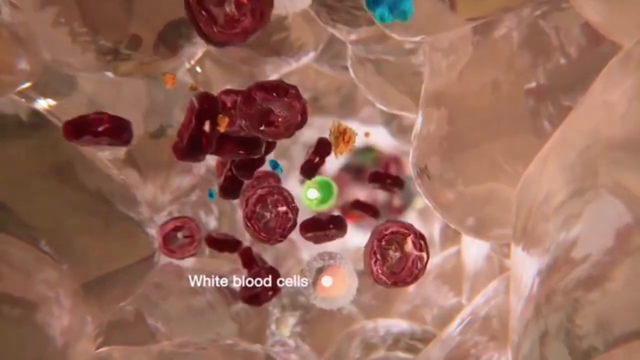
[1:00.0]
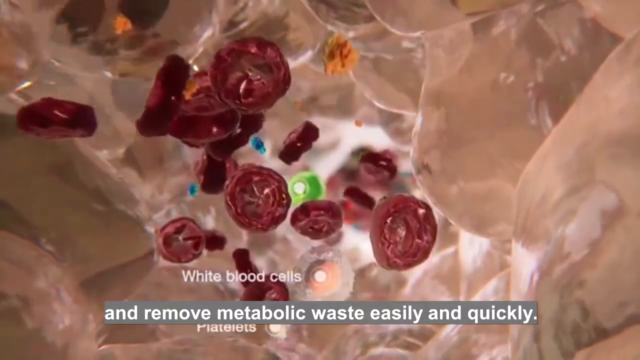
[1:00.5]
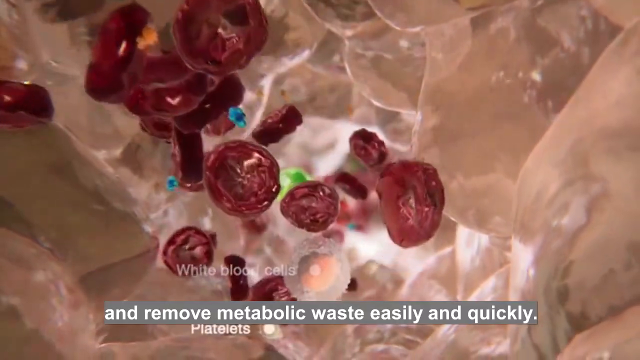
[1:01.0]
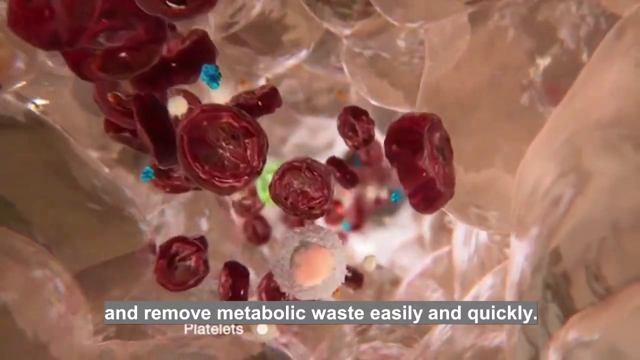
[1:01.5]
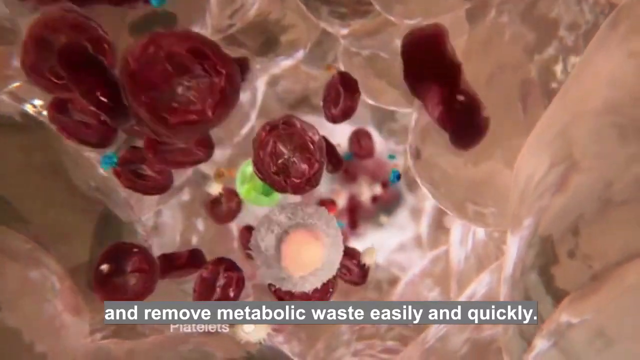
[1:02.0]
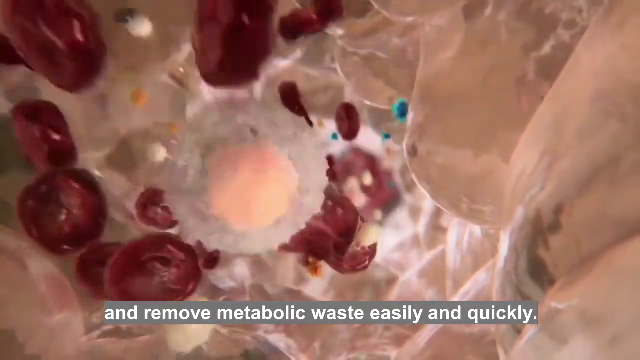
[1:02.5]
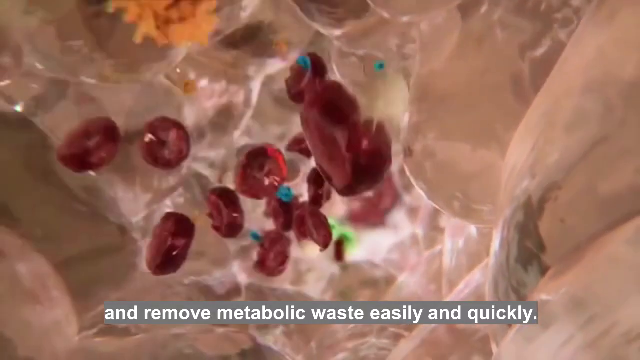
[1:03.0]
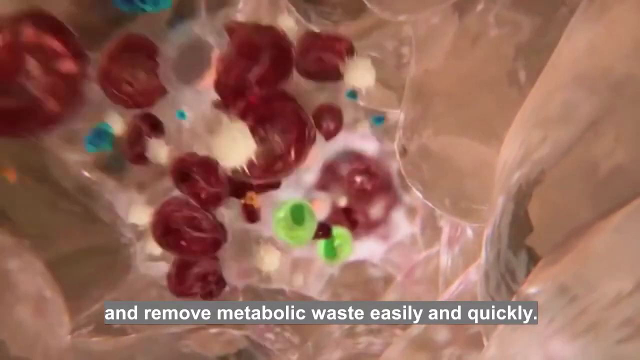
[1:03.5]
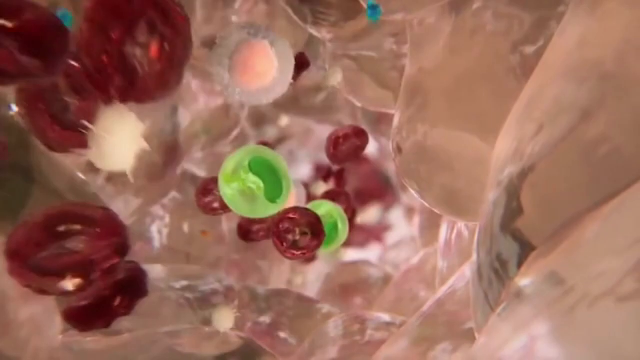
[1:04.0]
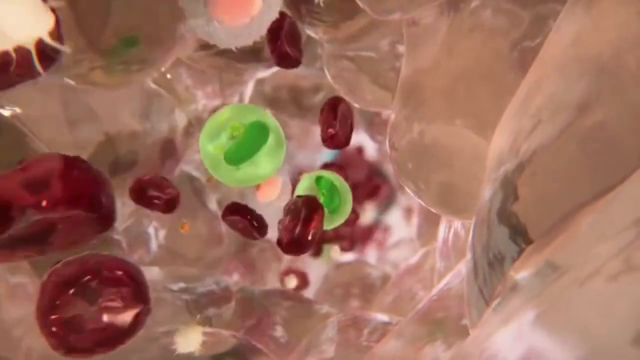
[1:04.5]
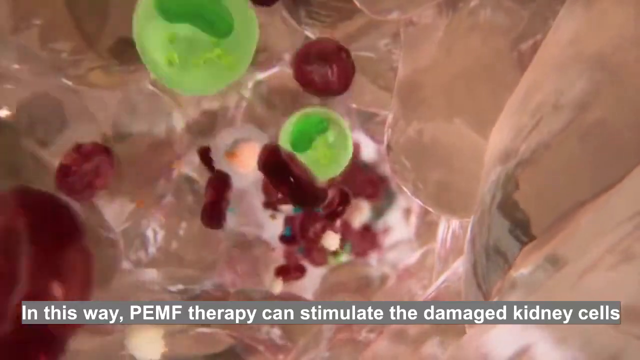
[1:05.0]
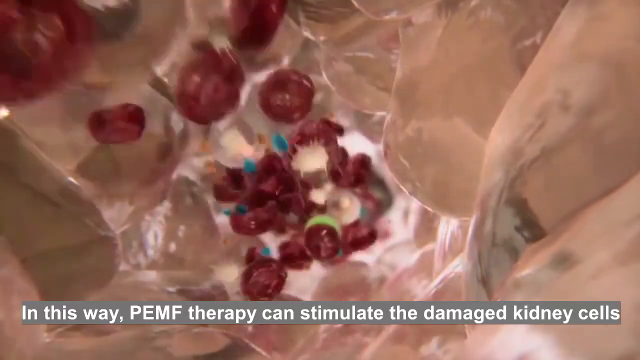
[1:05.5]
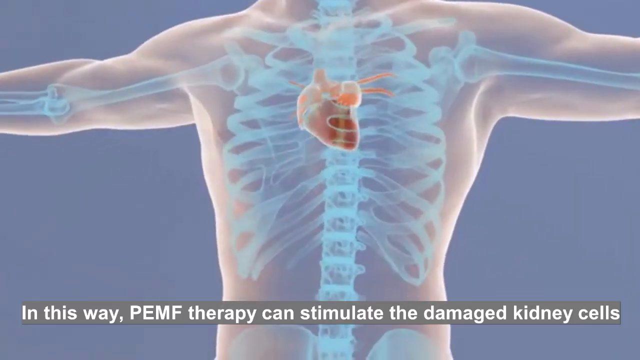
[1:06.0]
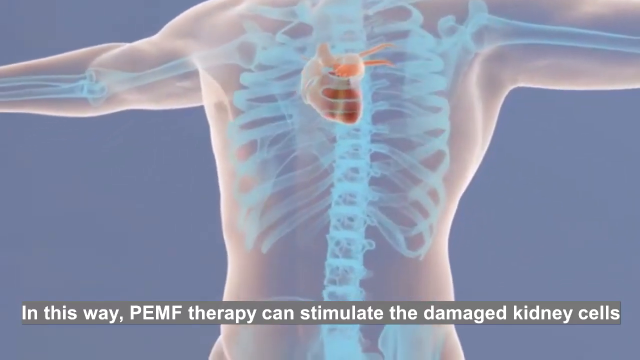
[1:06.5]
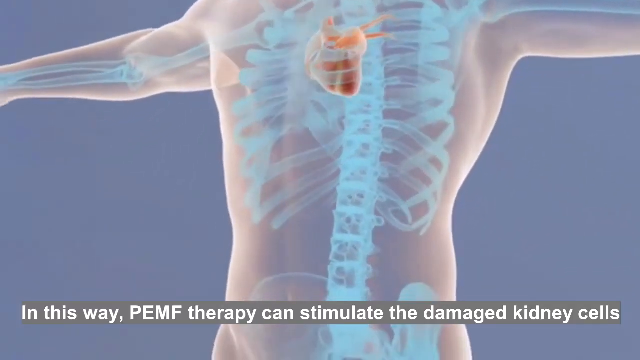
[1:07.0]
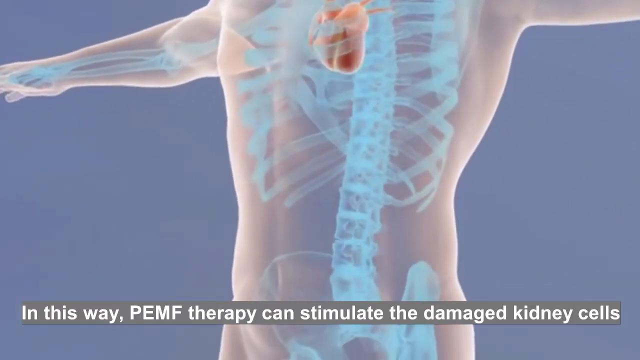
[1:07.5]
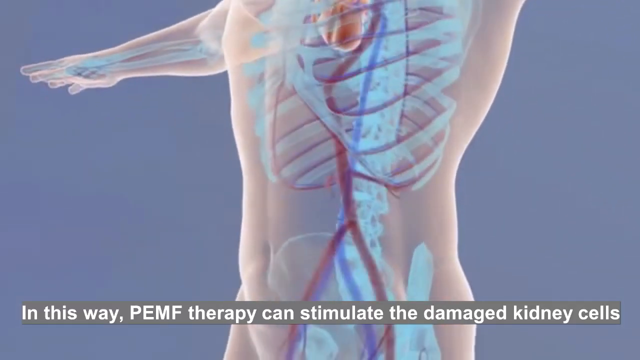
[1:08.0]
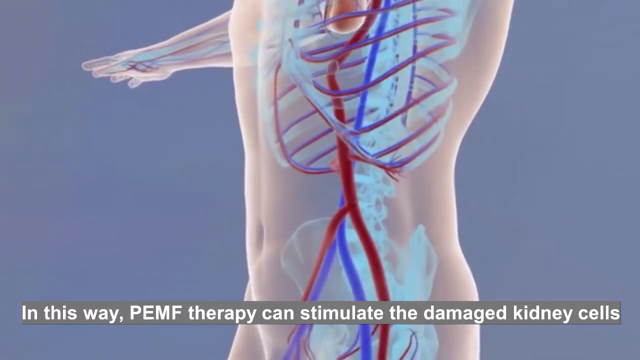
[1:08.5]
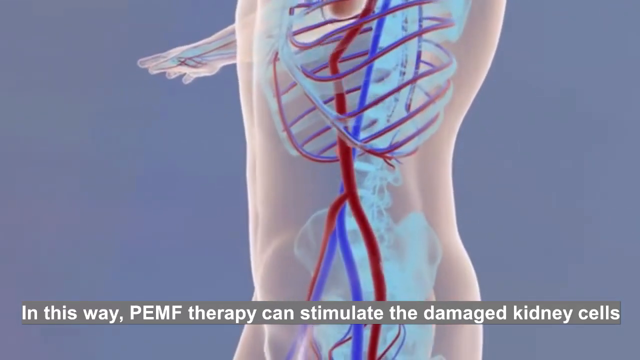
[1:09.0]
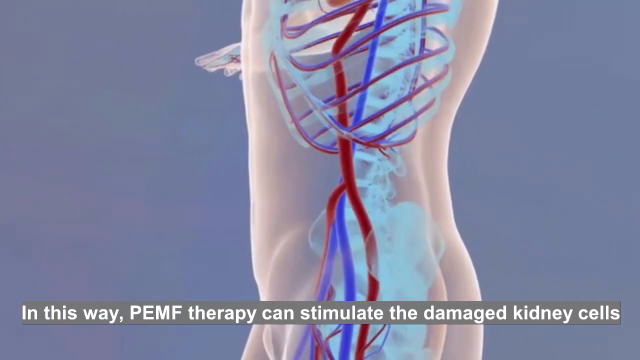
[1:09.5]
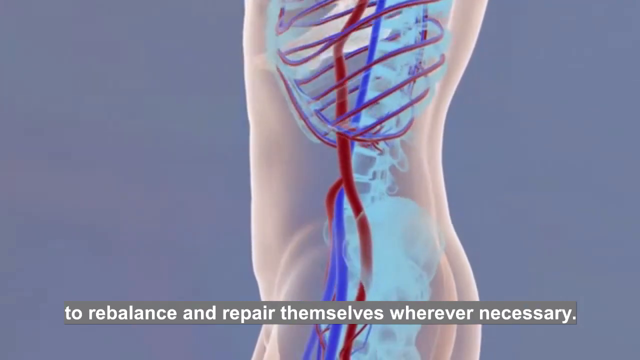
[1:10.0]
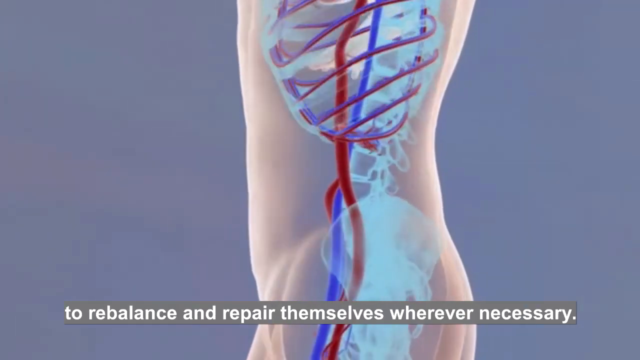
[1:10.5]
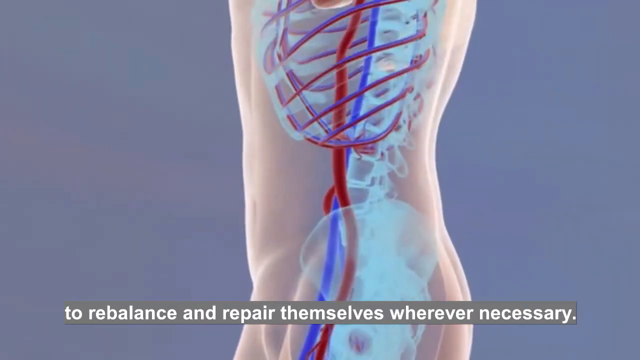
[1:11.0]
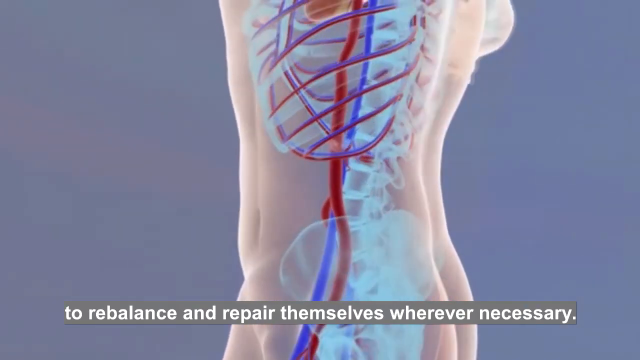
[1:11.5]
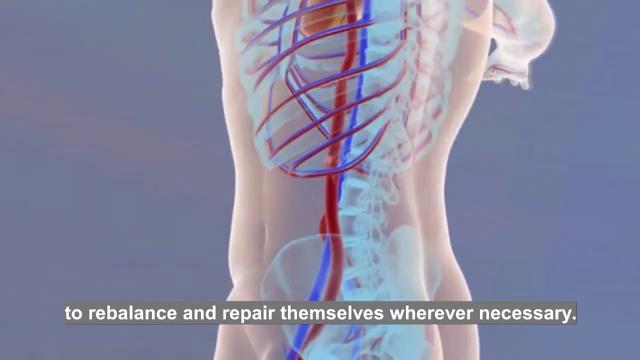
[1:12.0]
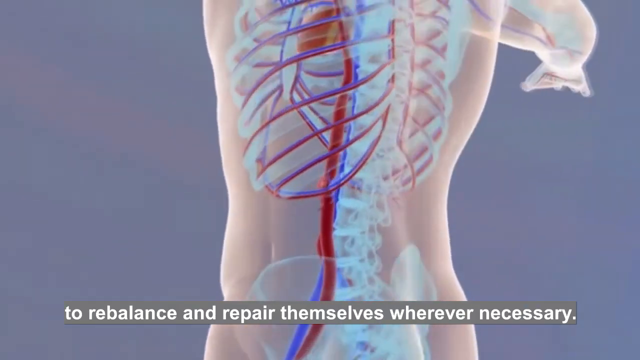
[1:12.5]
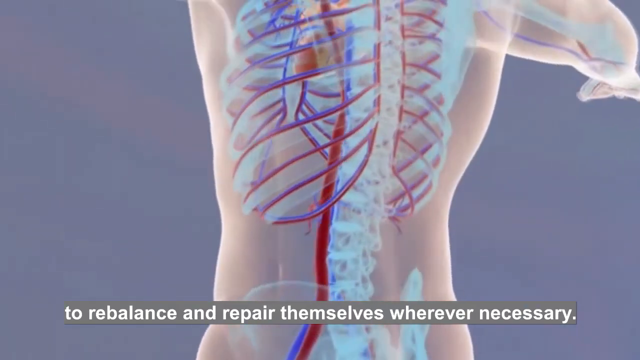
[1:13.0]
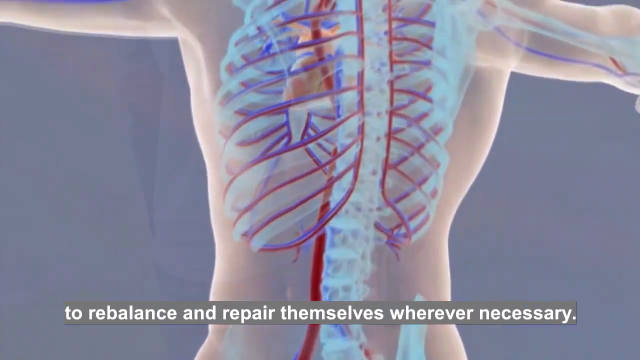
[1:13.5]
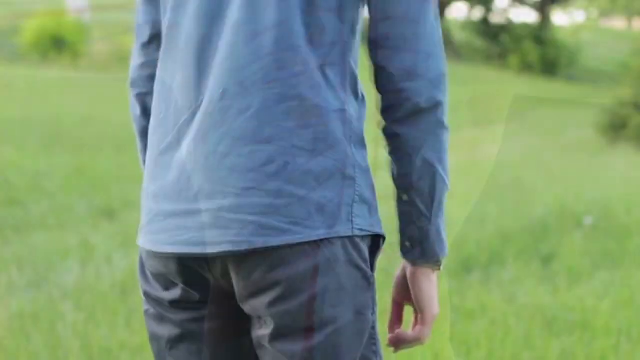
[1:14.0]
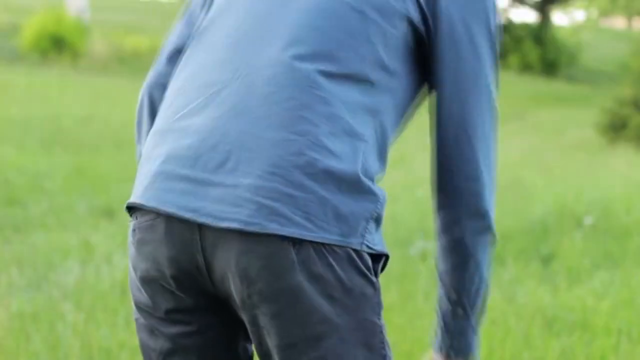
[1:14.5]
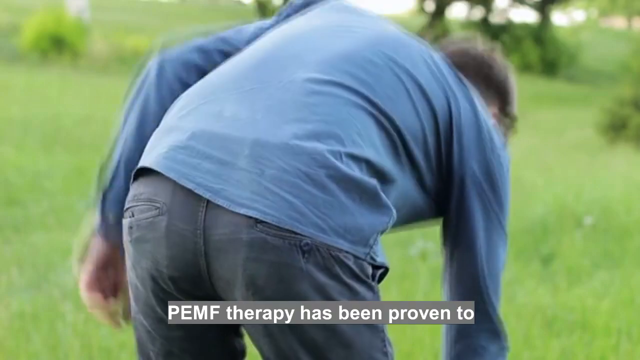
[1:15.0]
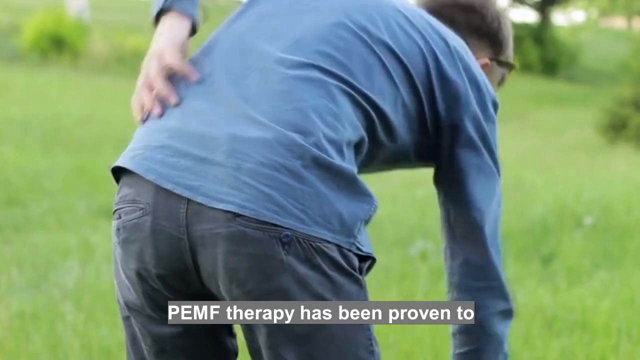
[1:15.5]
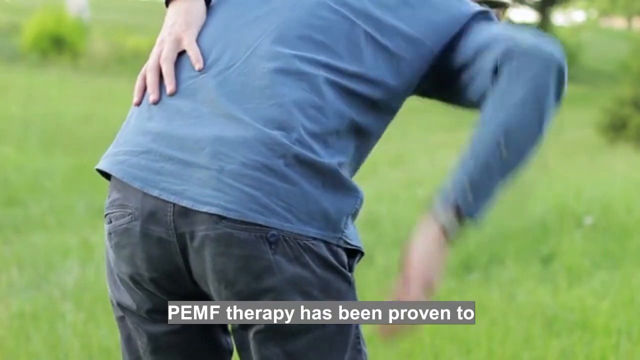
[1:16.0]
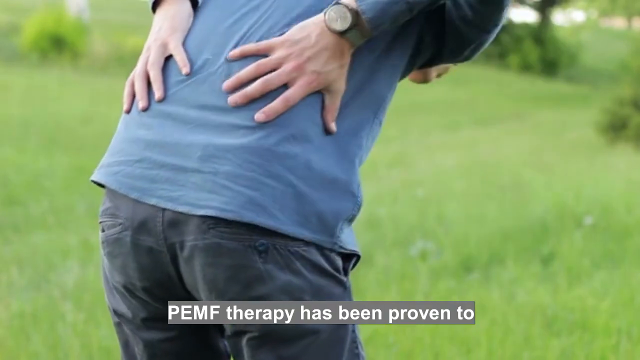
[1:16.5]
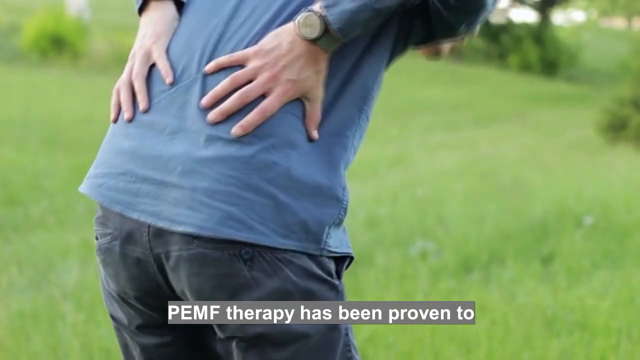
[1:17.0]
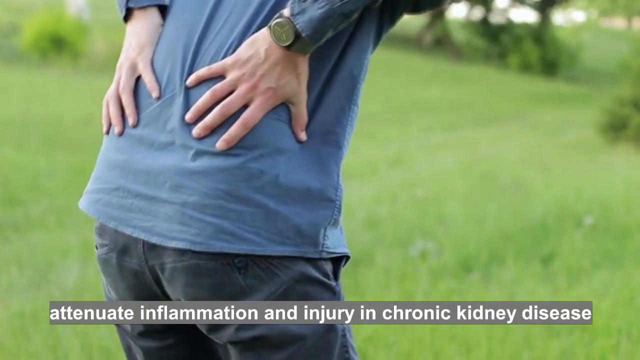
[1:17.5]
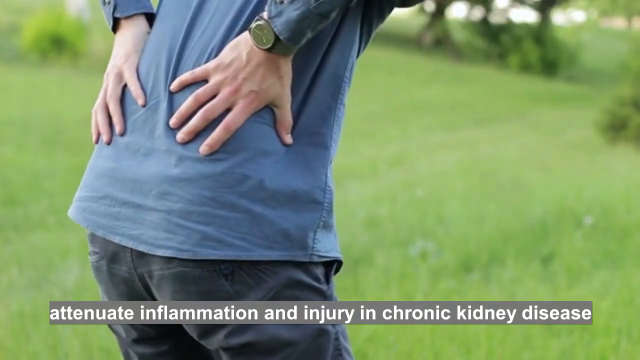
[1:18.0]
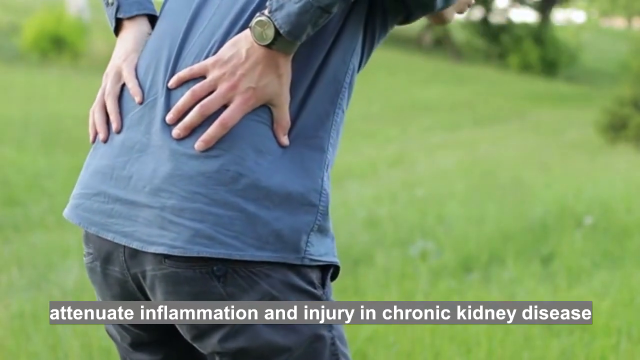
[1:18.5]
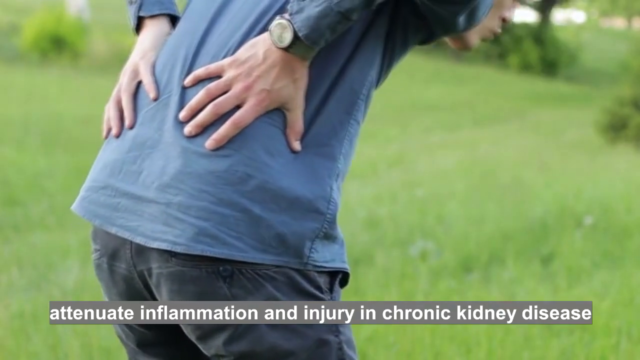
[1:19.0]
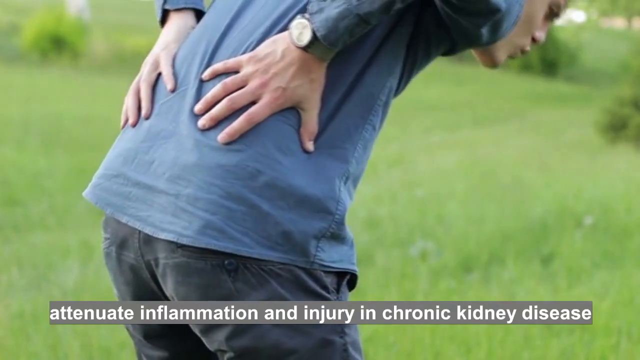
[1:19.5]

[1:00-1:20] The CGI image shows the labeled white blood cell with red blood cells floating through, and gray text at the bottom reads "and remove metabolic waste easily and quickly." Platelets appear, labeled. The motion speeds up a little, and little green things flow through, apparently representing the PEMF treatment. Text reads "in this way, PEMF therapy can stimulate the damaged kidney cells". The video cuts to a rotating body on a blue background showing the heart and bone structure; the view moves down, and the main arteries are shown running through it, with text reading "to balance and repair themselves whenever necessary". The video then cuts to a man outside with his back toward the camera, bending down to pick something up, wearing gray pants and a long-sleeved blue shirt. Text begins "PEMF therapy has been proven to" and ends "inflammation and injury and chronic kidney disease".